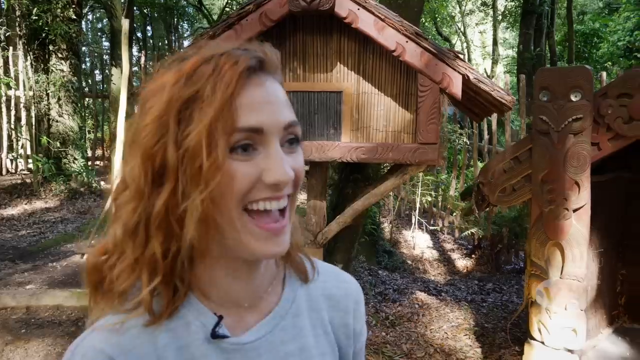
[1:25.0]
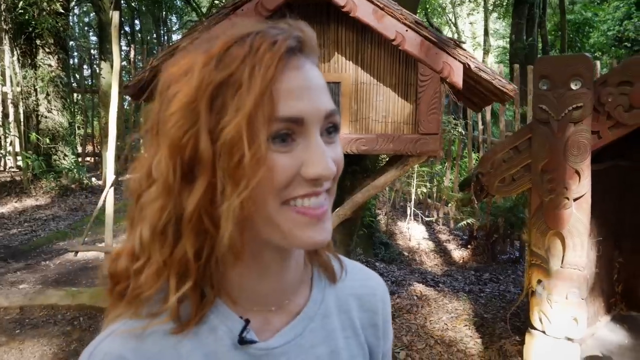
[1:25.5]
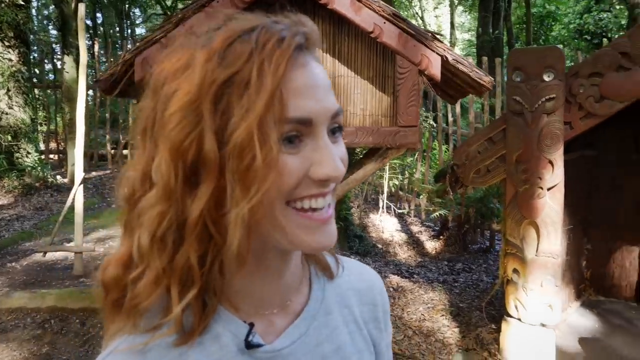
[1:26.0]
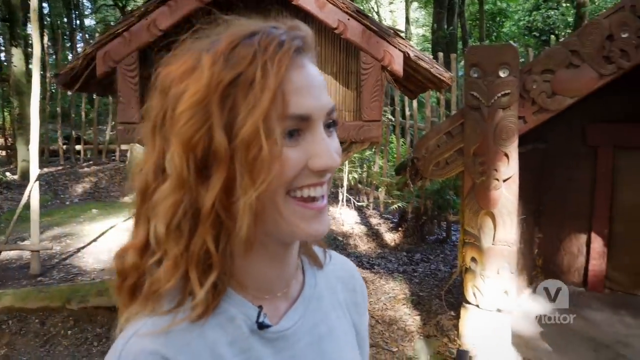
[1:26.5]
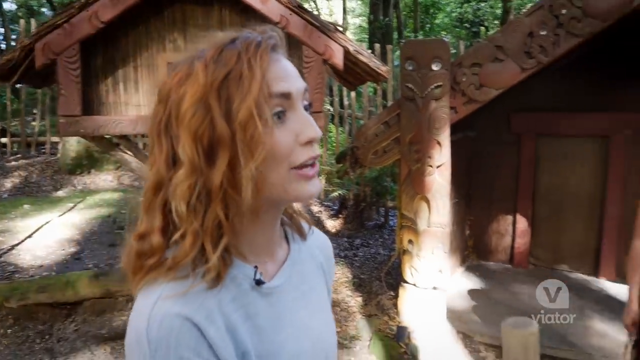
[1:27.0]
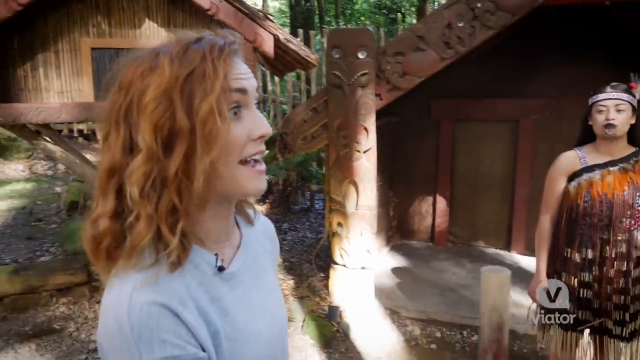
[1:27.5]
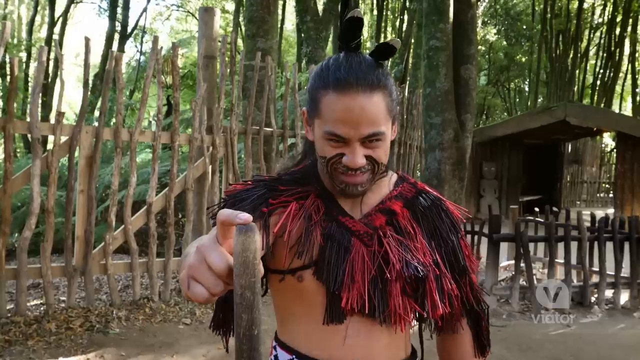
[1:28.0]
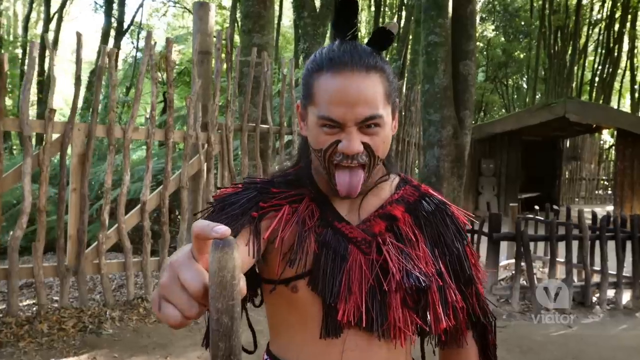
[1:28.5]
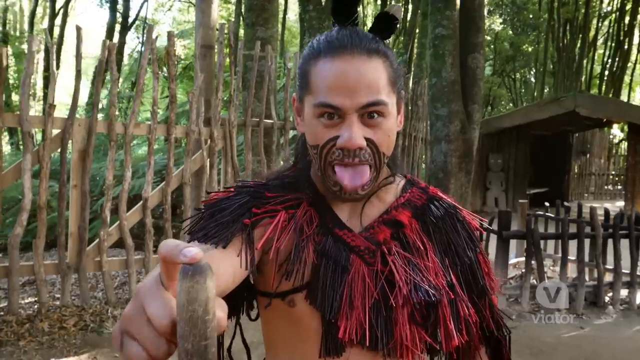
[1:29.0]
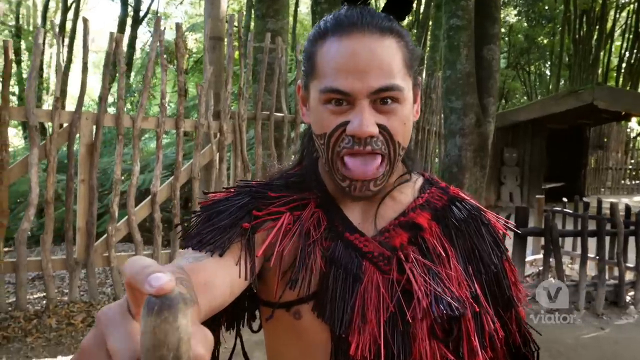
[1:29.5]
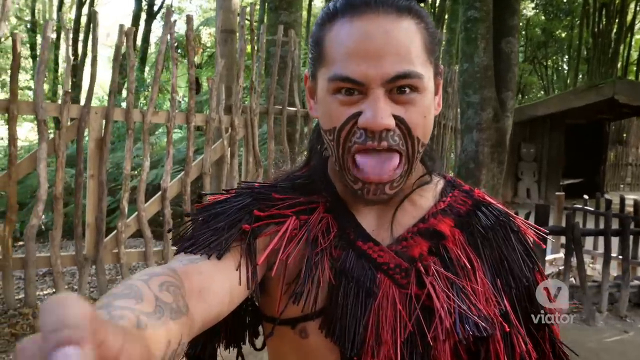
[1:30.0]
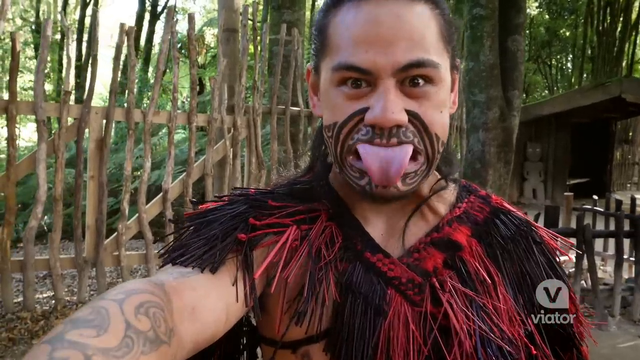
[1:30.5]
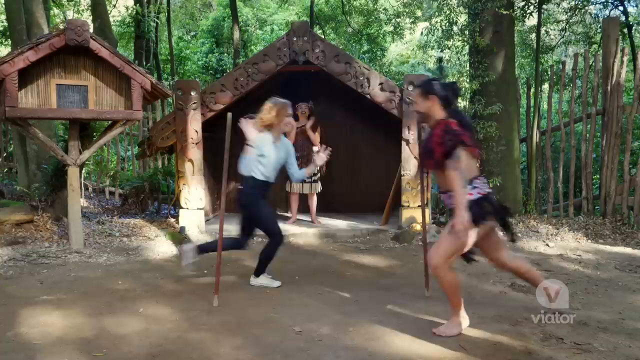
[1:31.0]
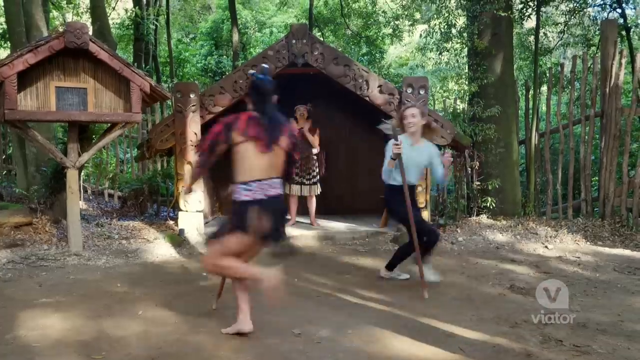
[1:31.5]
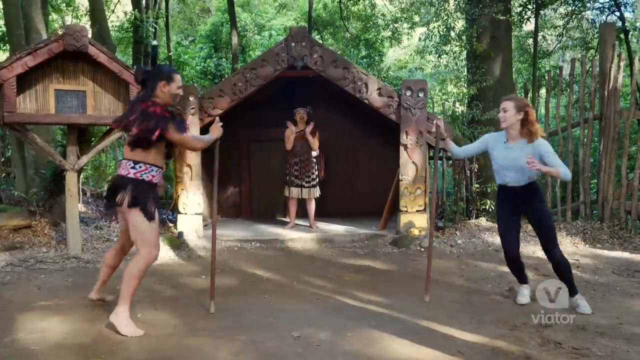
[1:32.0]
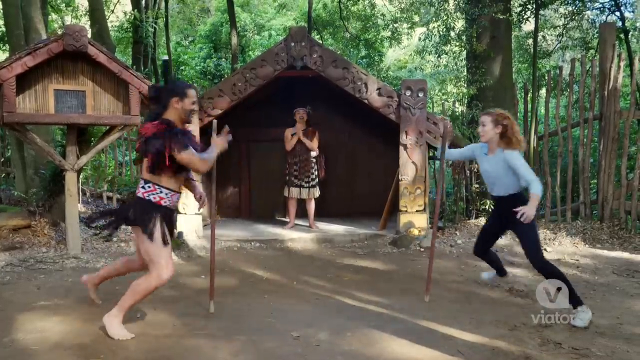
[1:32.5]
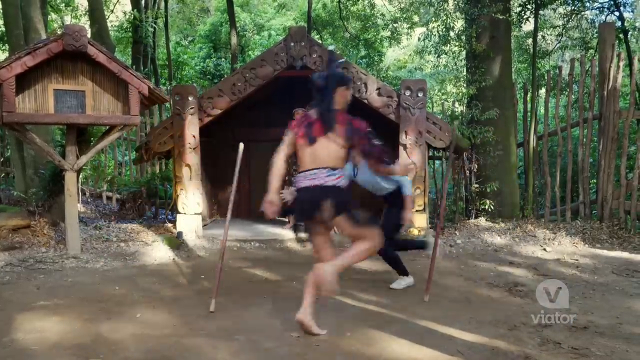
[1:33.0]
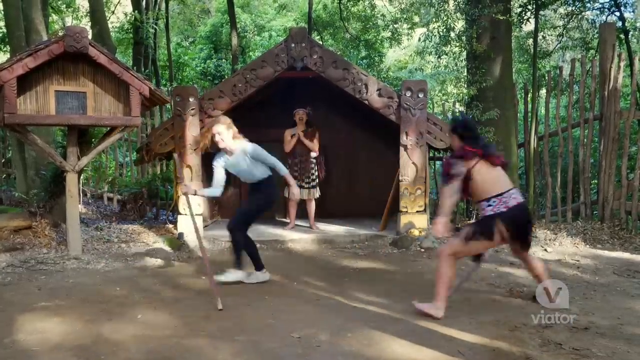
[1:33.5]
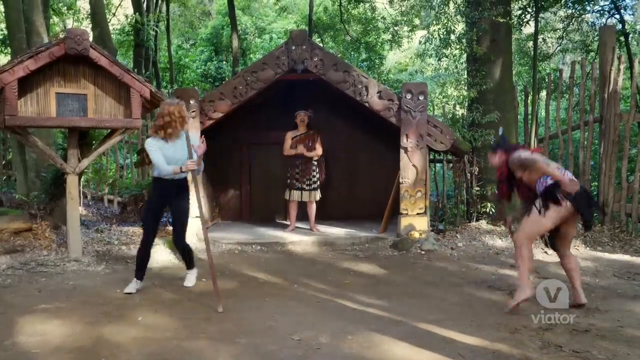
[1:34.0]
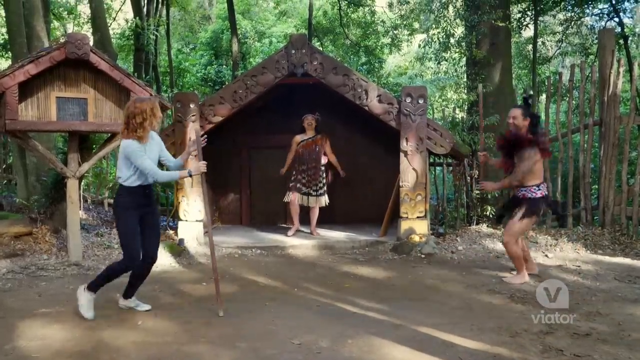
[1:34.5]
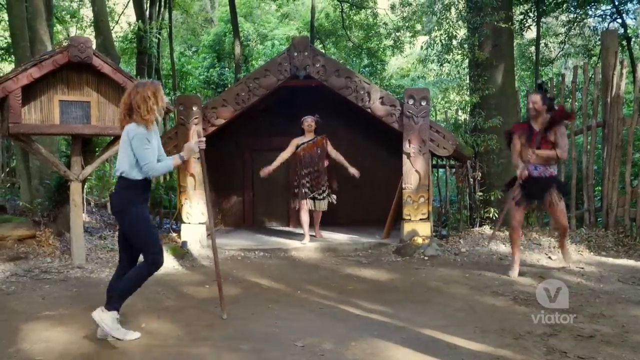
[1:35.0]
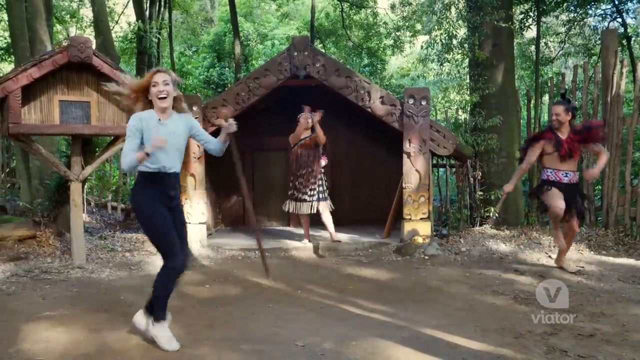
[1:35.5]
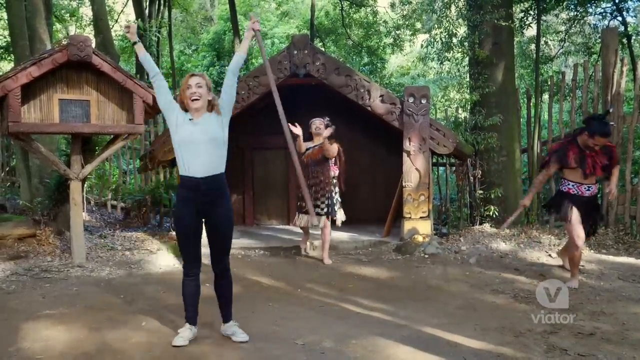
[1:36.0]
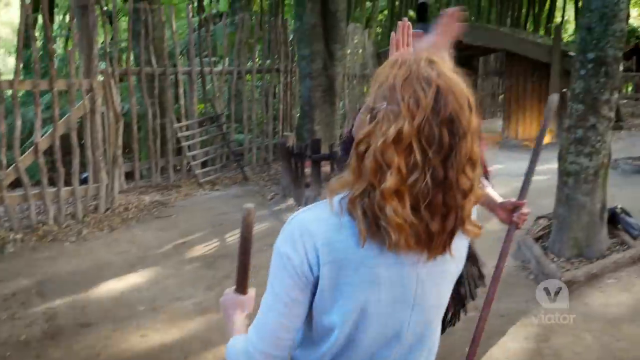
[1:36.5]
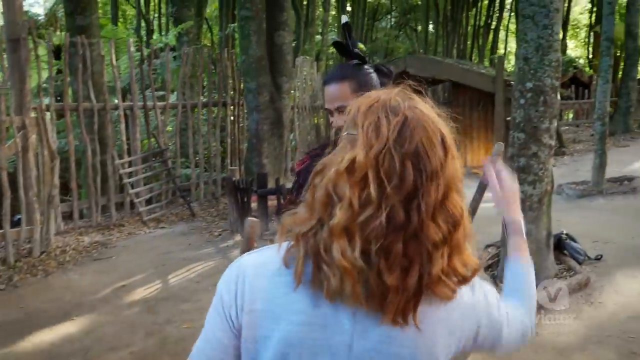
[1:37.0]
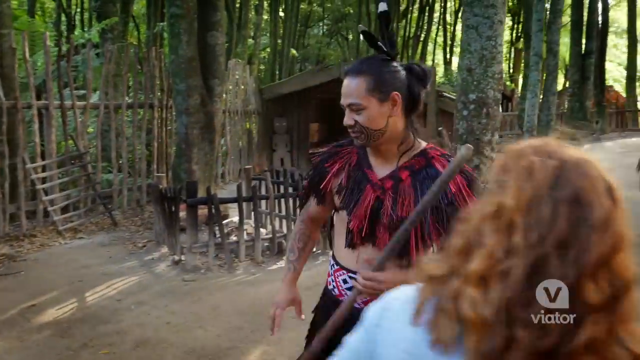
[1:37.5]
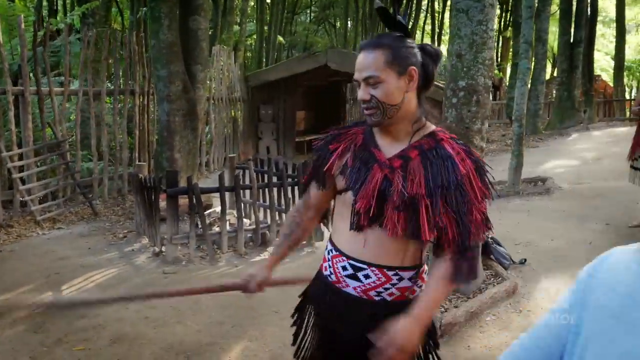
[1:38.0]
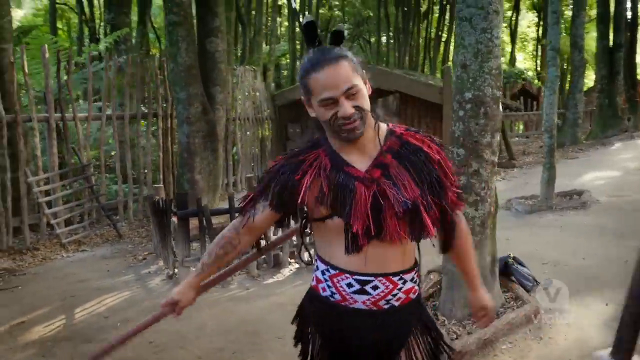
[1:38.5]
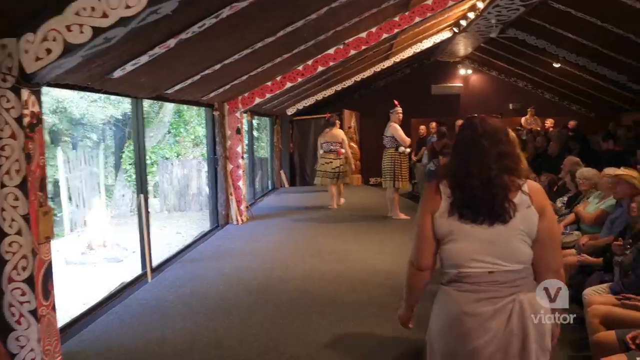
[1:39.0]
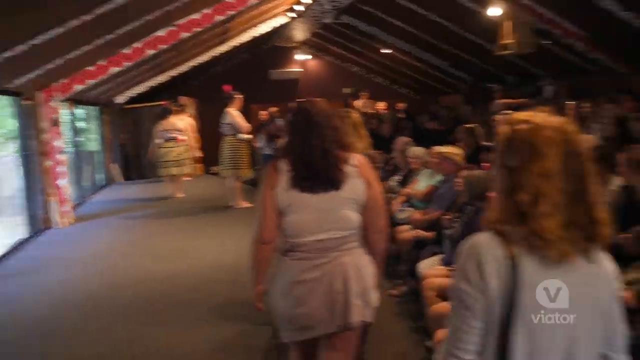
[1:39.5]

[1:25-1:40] The woman host talks to somebody, and the shot pans to the native man with the black ink design on his face, who sticks his tongue out and moves it up and down, with his right hand sticking out in front of him holding a stick. He and the host play a game in which they put their sticks in the middle of a dirt area and appear to trade places, trying to make the sticks stand up without falling. Behind them a native woman claps her hands, and the host seems really happy. When they are done, she jumps up and down, claps her hands and high-fives the native man. Inside a dark building, a group of people sit as if in an audience watching something; little is visible in the darkness, but it looks to be a pretty big crowd. The host walks in behind another woman.